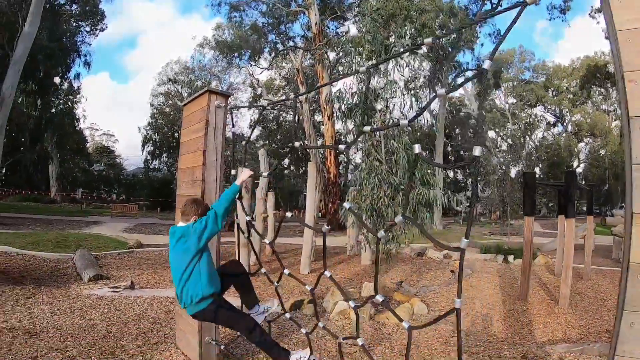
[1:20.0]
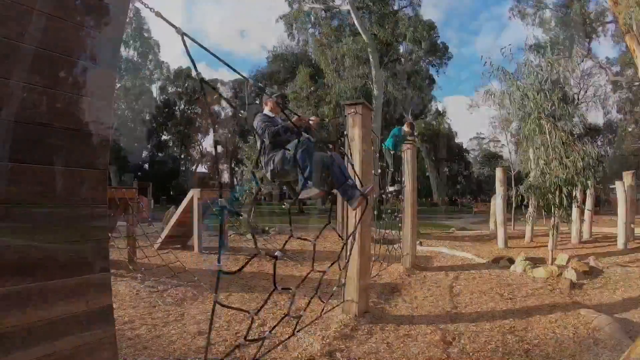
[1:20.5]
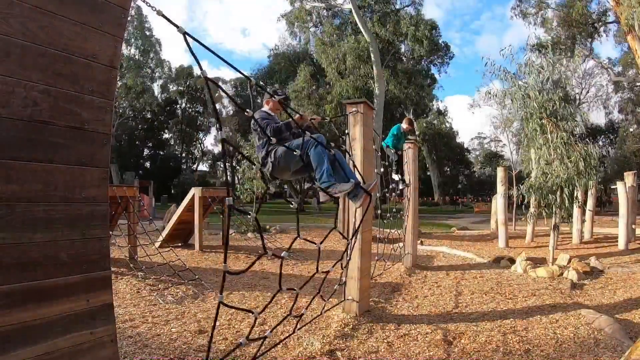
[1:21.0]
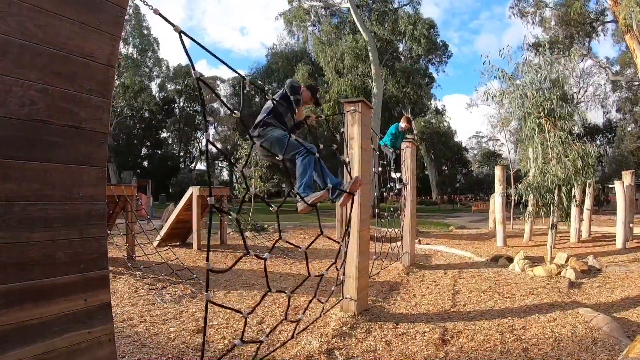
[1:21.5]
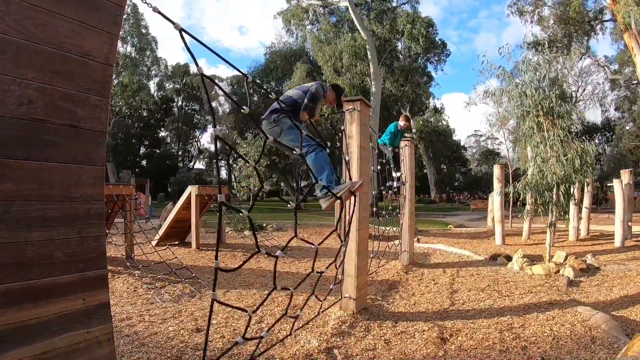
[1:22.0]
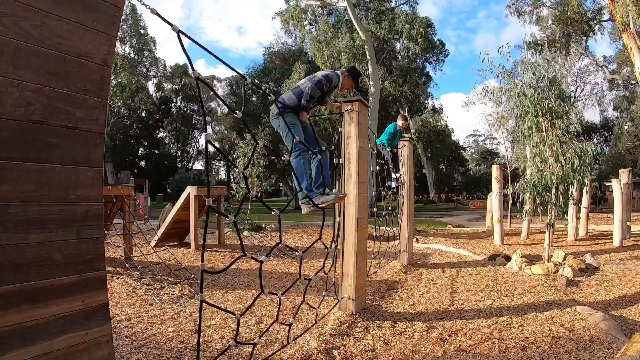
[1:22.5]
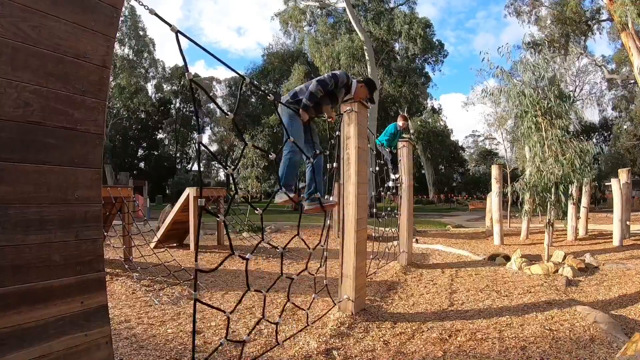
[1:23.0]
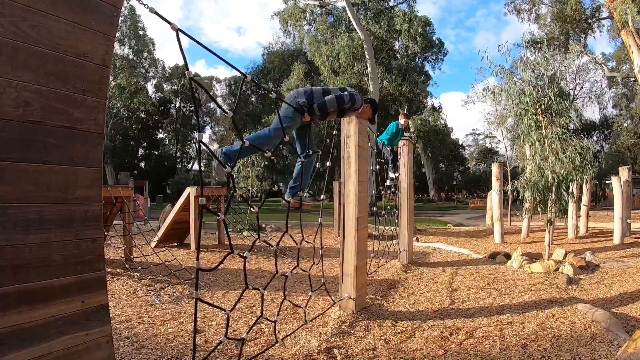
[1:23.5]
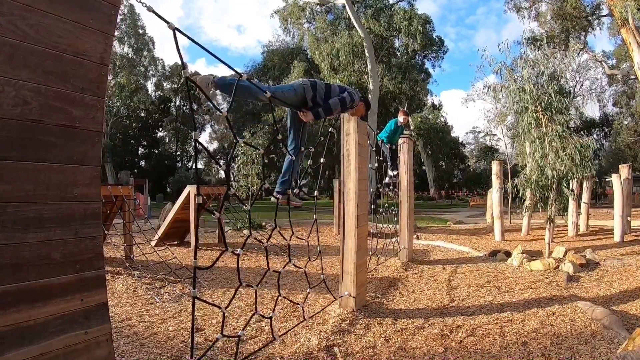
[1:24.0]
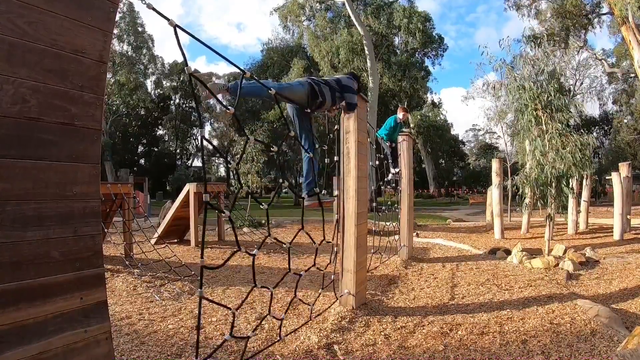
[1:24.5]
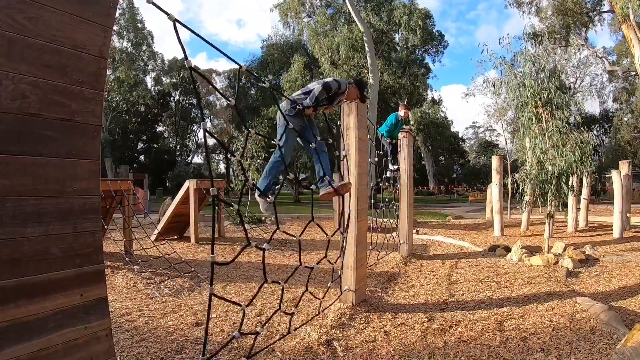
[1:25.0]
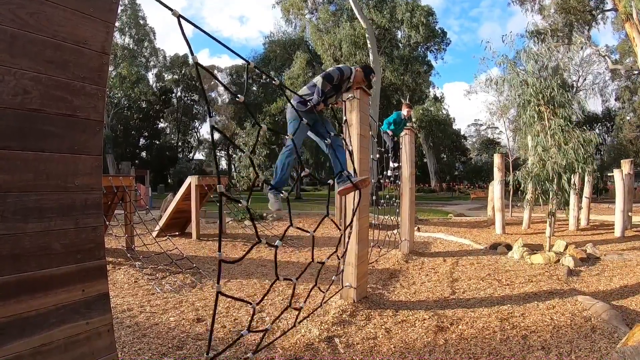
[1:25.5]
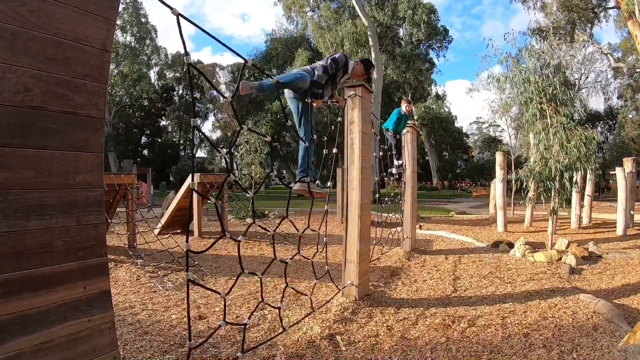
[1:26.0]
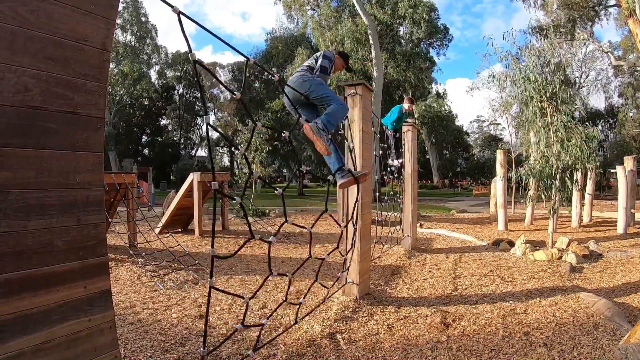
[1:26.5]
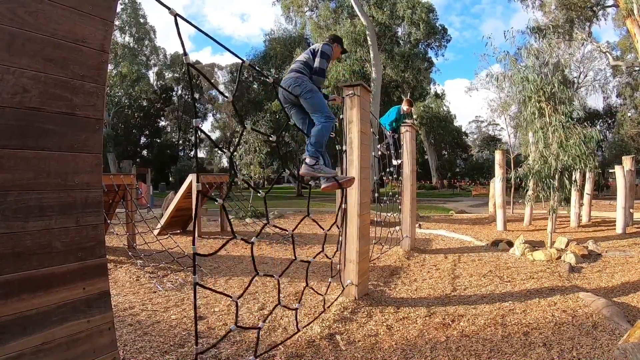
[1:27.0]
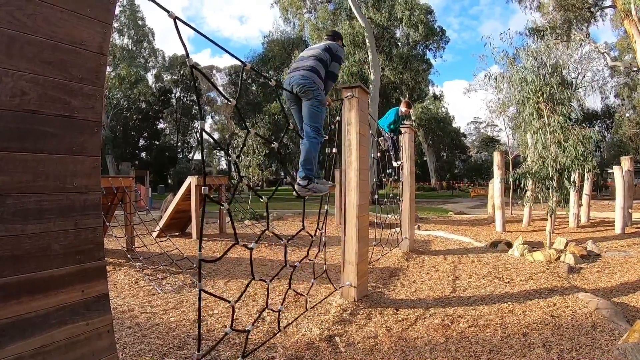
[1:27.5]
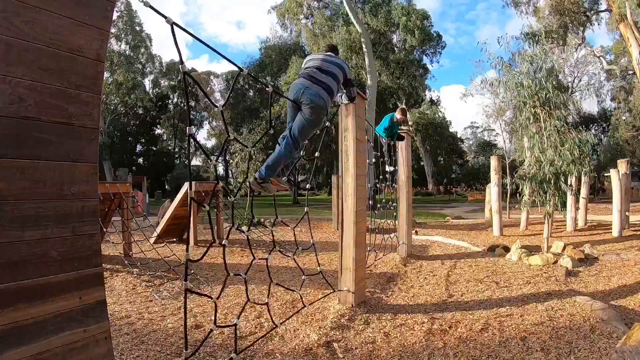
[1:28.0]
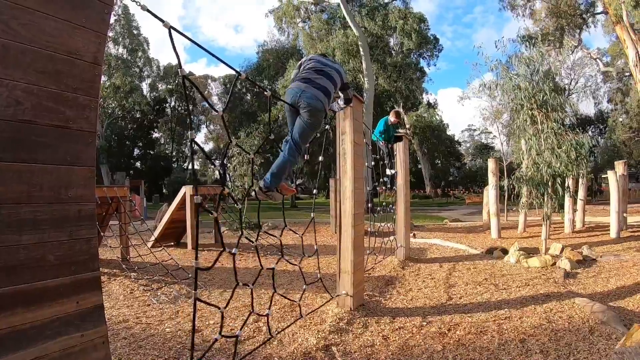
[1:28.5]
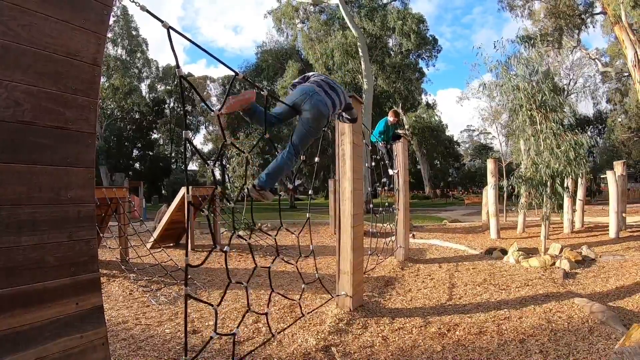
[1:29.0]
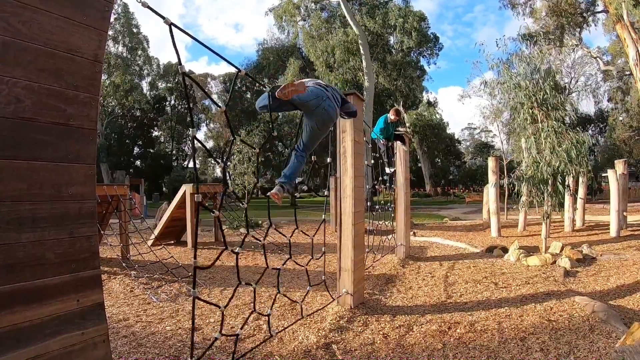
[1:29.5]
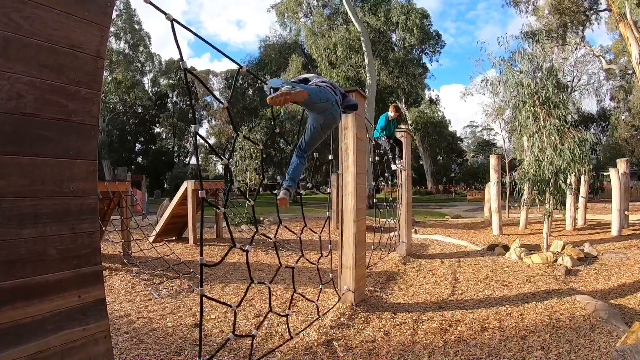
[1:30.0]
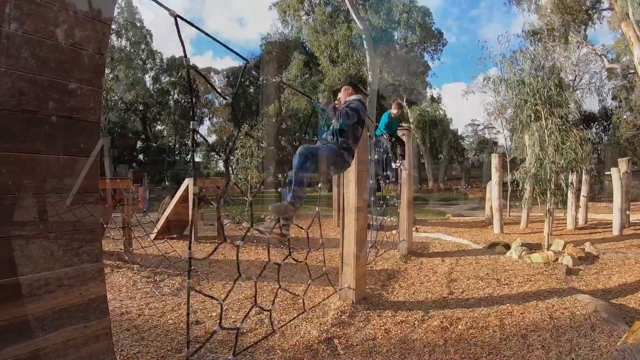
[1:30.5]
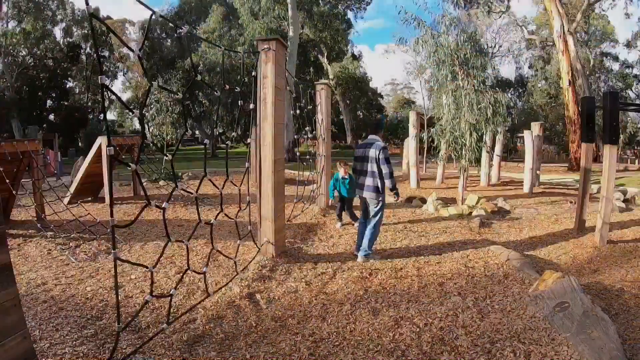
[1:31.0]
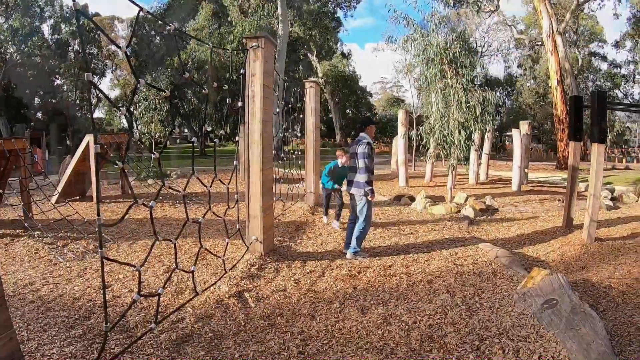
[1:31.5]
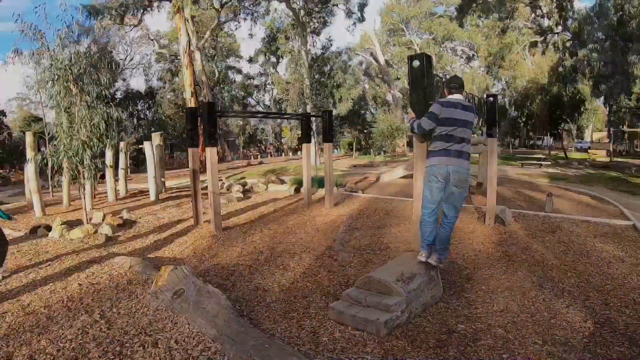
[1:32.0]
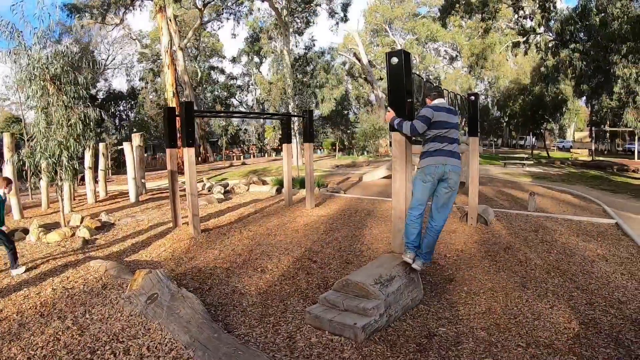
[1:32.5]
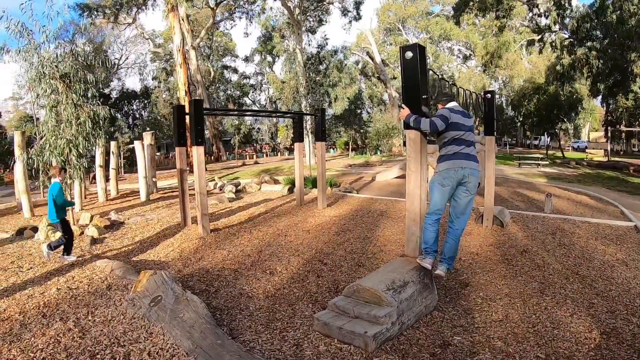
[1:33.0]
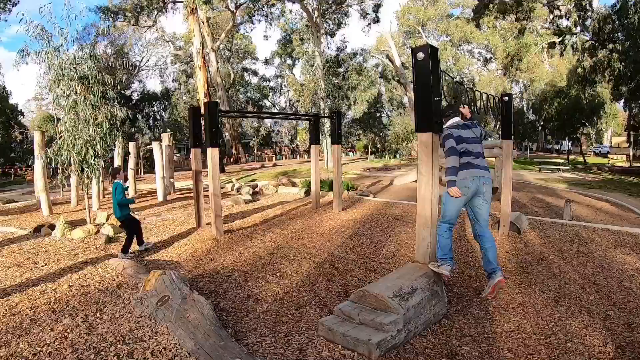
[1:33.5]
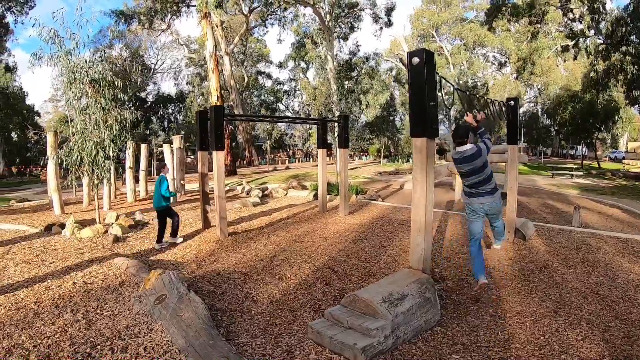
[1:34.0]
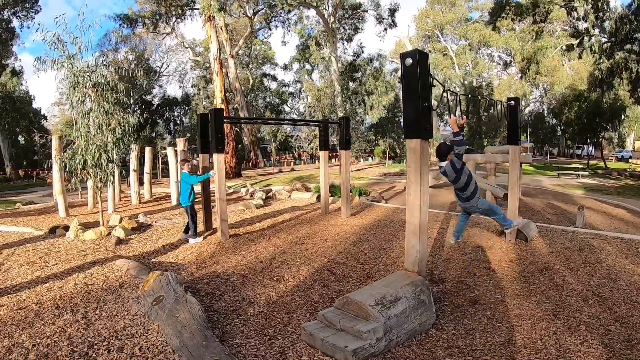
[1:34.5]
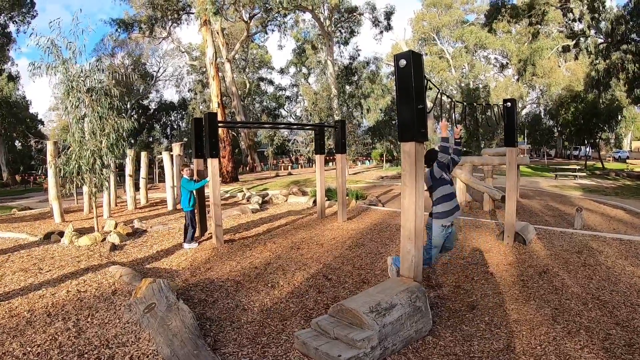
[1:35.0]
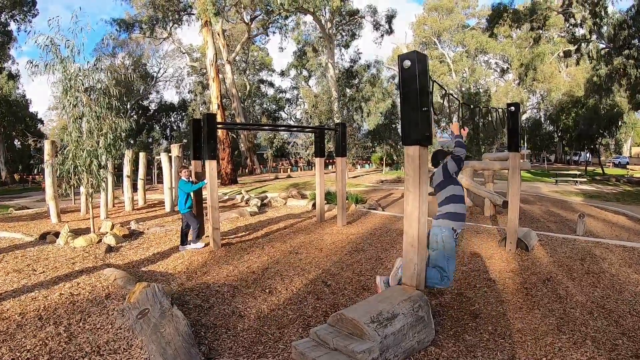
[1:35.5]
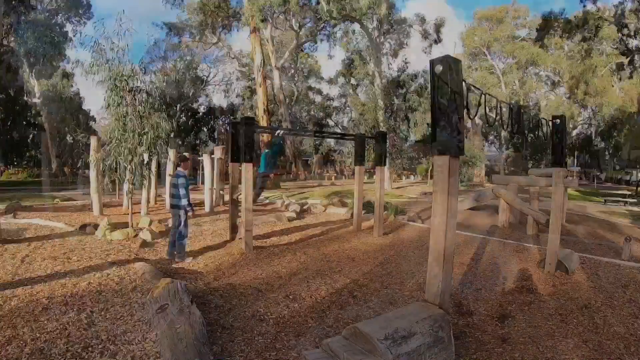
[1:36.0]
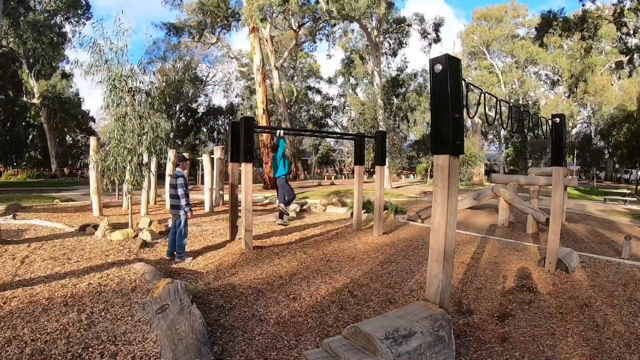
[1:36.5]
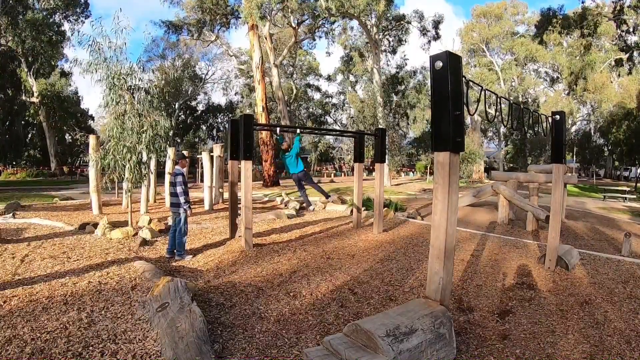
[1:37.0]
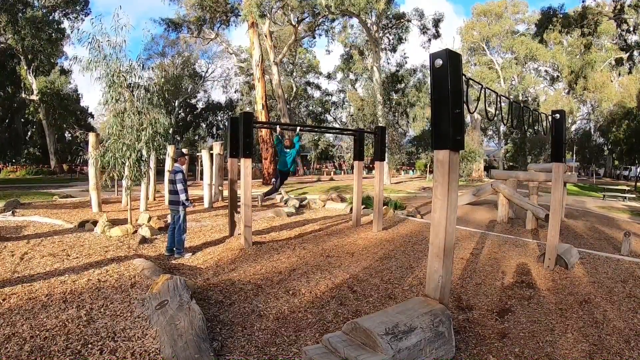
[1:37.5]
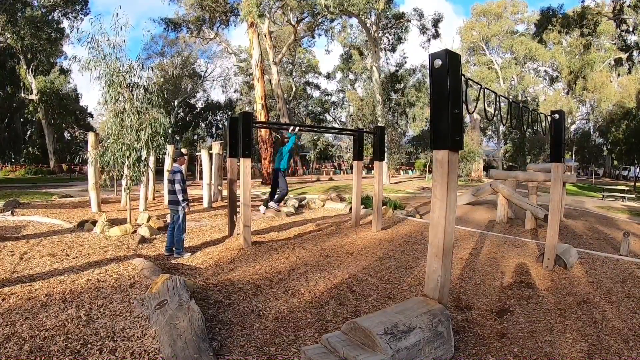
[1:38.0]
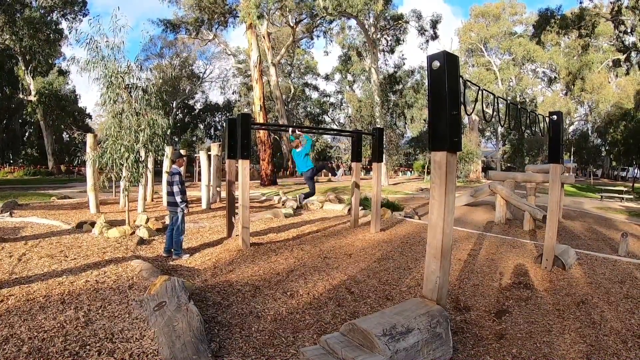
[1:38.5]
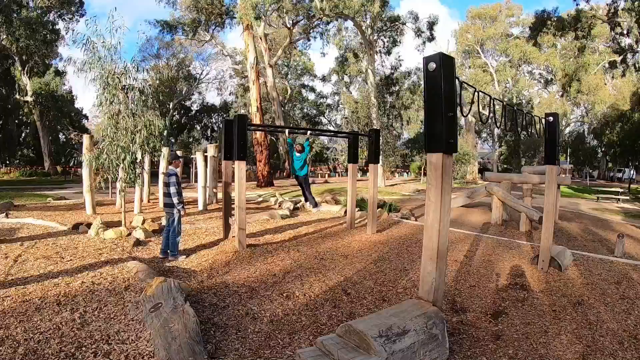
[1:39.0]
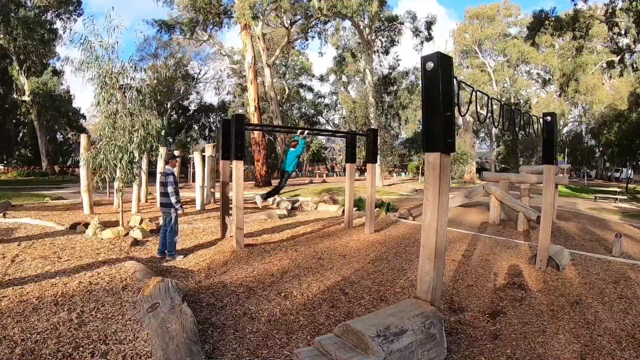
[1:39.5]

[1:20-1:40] In a park, there are walkways in the background, a blue sky with white puffy clouds, trees all around and greenery, plus a separated play area full of challenging activities that look like they are meant for children. In front of the camera, the little boy with red hair, a bright blue sweater and black pants starts to climb a webbed rope net tied together and strung between two posts. The man in the striped polo and baseball cap tries to cross over the top of that webbed ladder and slide back down to the ground. Both the man and the boy go through the ninja course, trying the separate activities. One is a hand ladder stretched across the top, which is crossed by hanging from it and moving one hand after the other, one rung at a time. Both the man and the boy appear to be enjoying this together, and the man seems to sometimes show the boy how to do some of the activities.